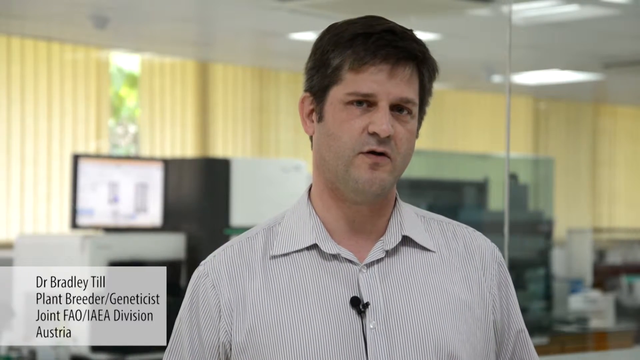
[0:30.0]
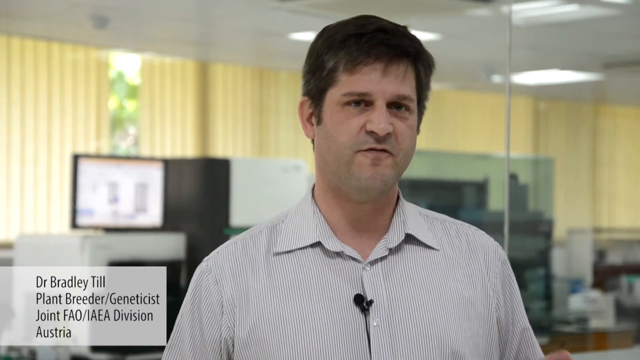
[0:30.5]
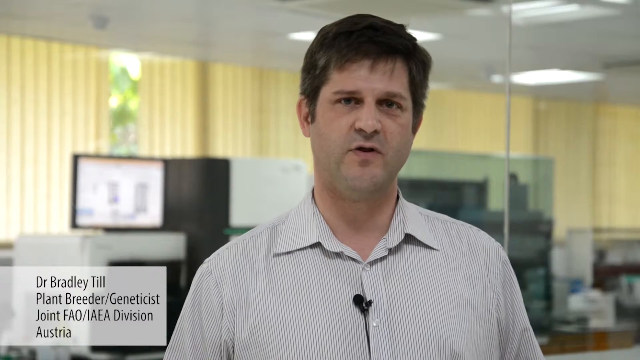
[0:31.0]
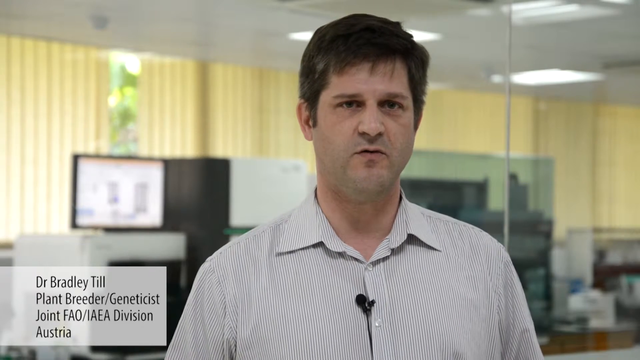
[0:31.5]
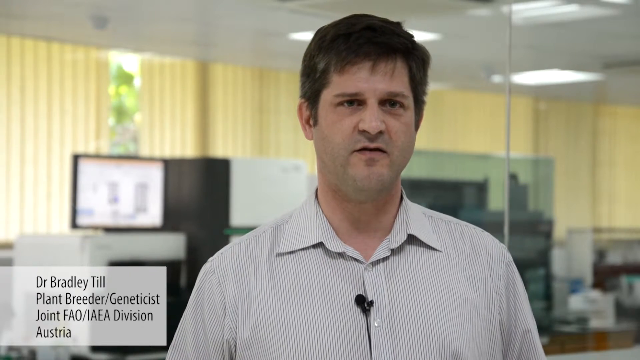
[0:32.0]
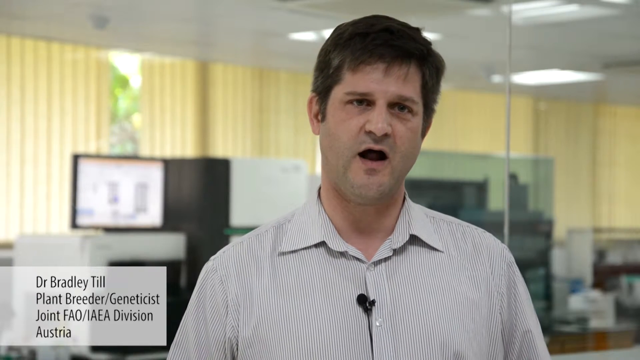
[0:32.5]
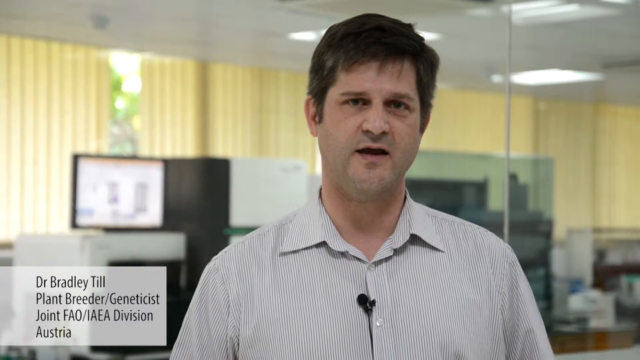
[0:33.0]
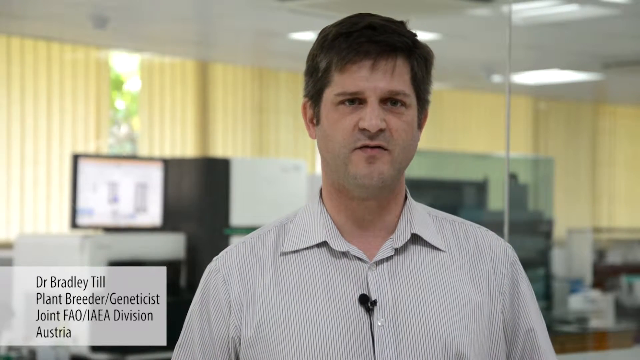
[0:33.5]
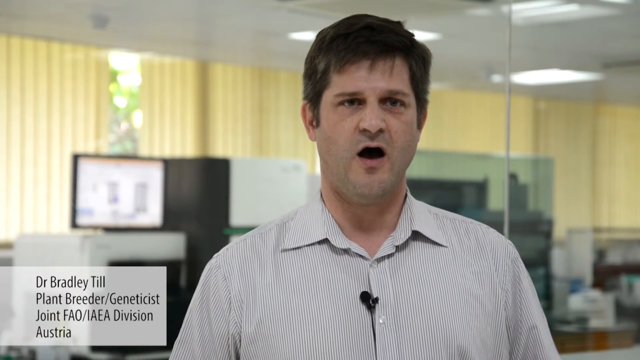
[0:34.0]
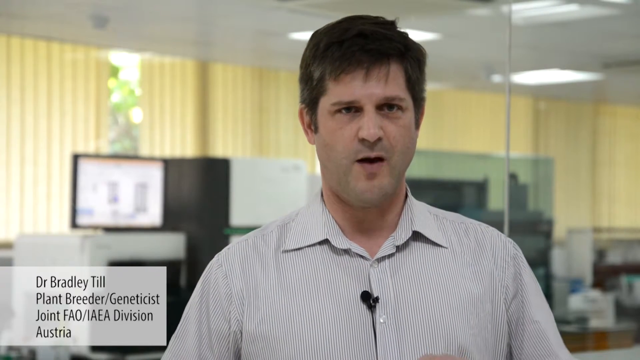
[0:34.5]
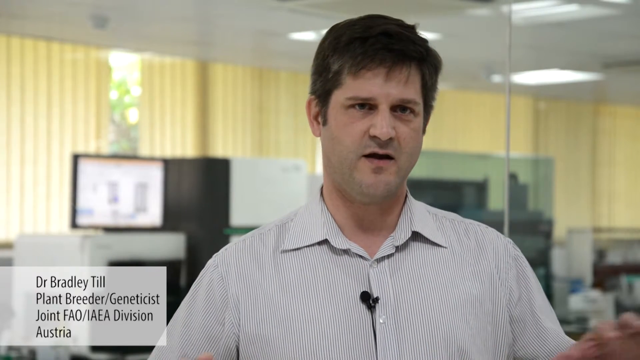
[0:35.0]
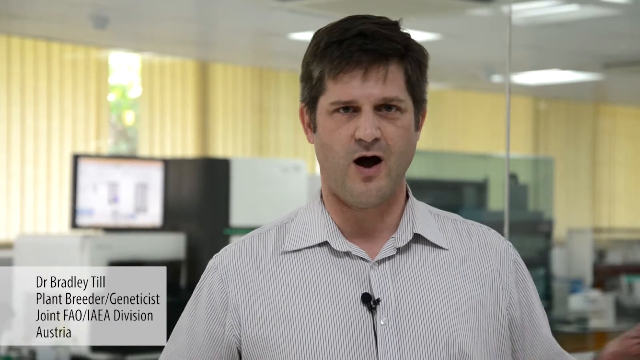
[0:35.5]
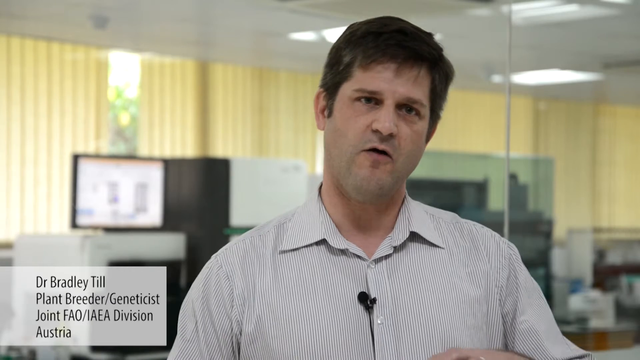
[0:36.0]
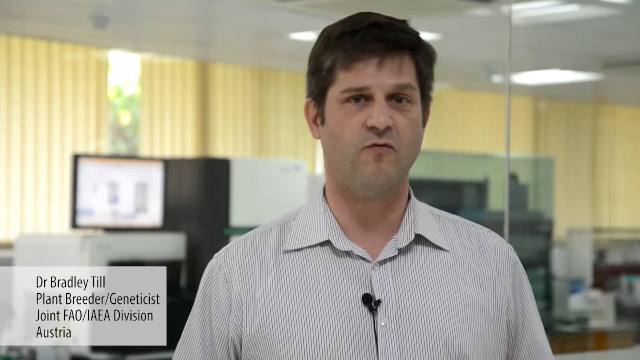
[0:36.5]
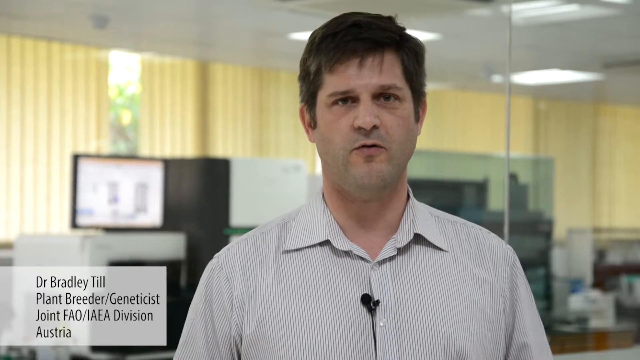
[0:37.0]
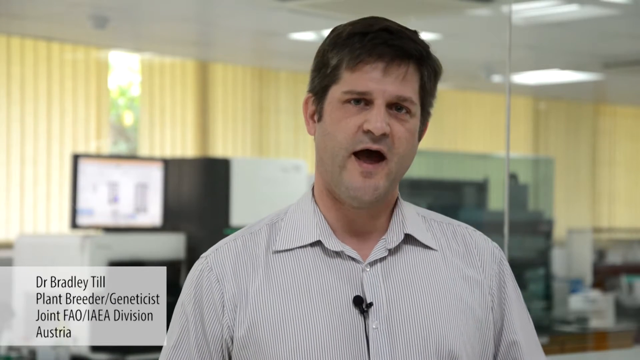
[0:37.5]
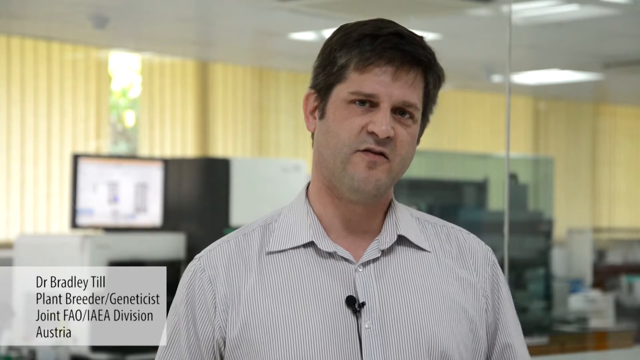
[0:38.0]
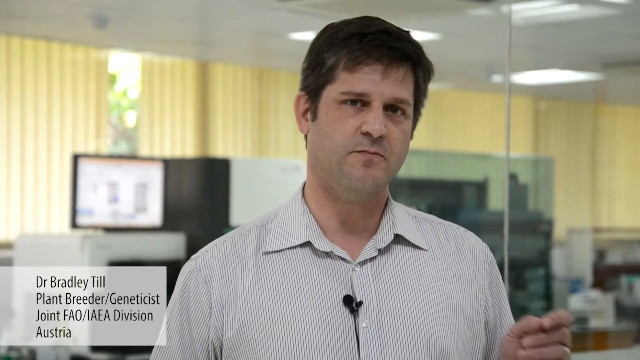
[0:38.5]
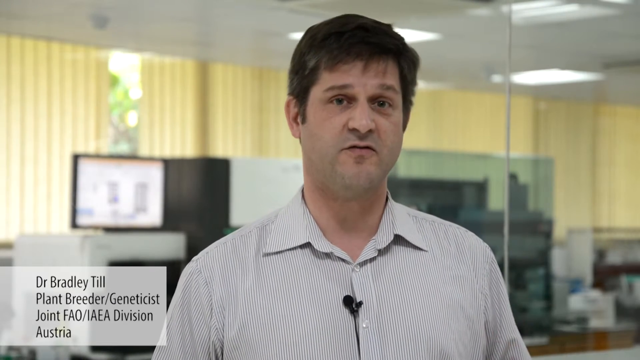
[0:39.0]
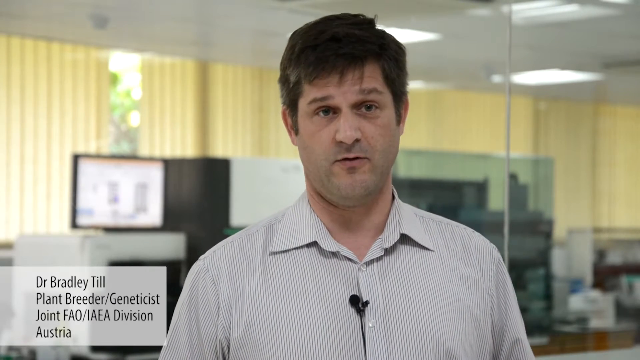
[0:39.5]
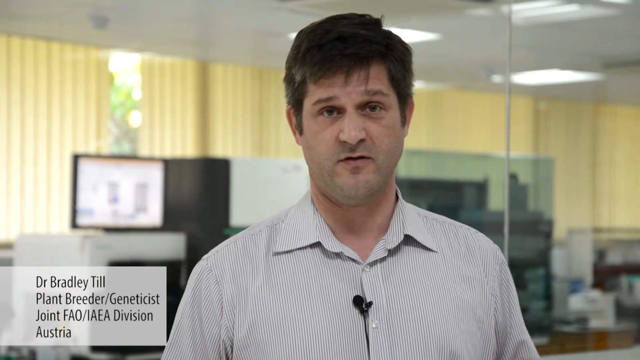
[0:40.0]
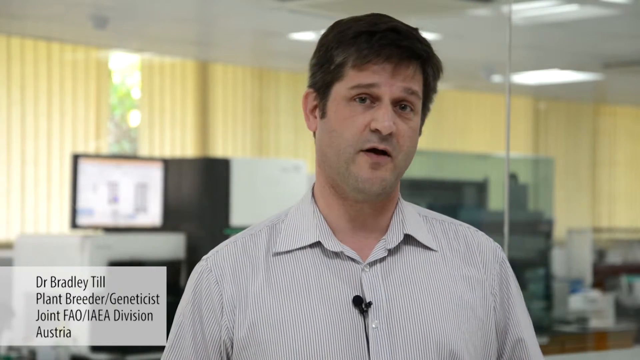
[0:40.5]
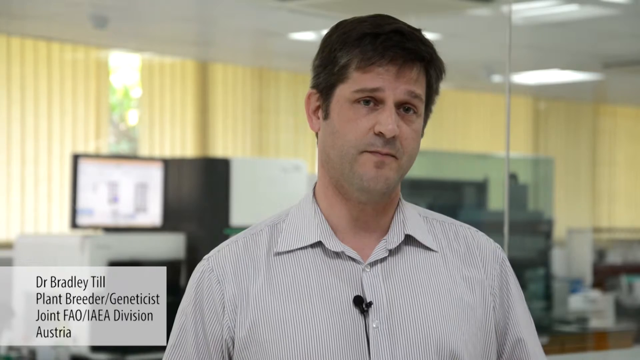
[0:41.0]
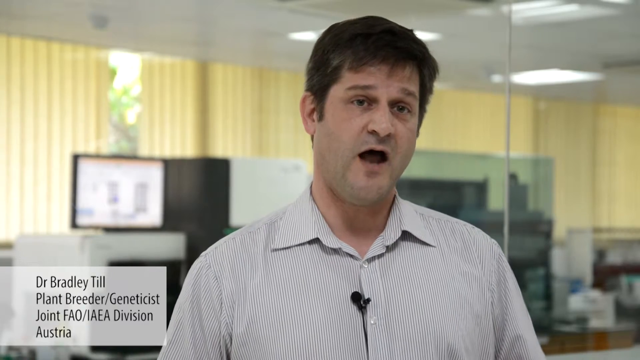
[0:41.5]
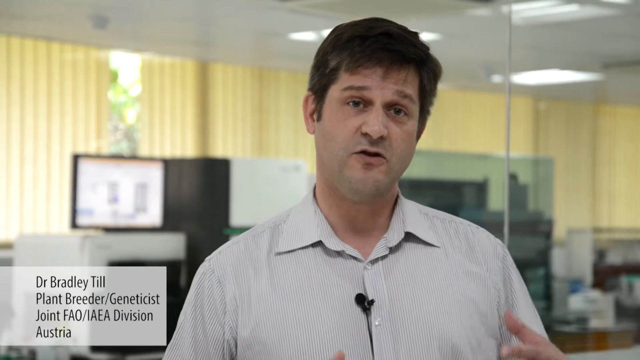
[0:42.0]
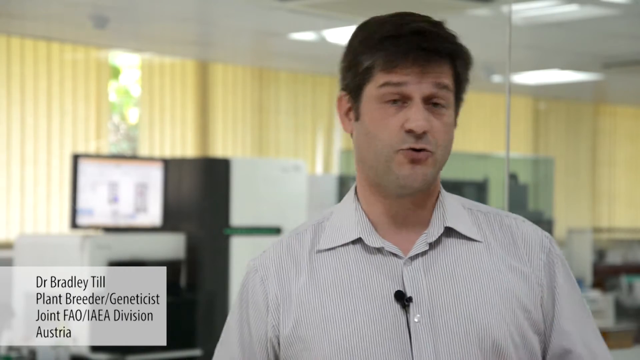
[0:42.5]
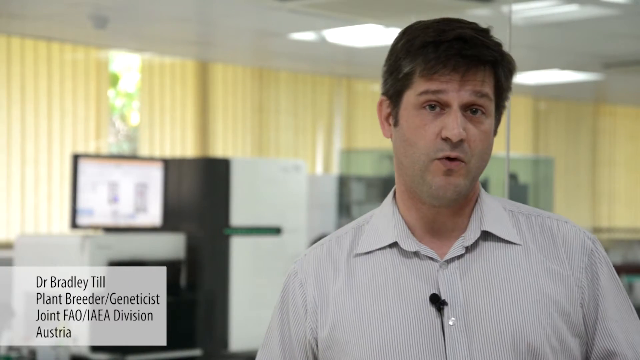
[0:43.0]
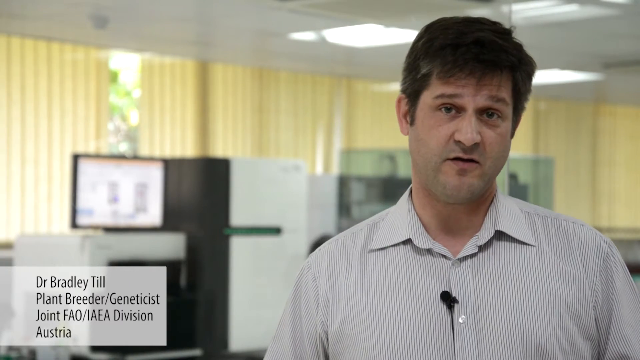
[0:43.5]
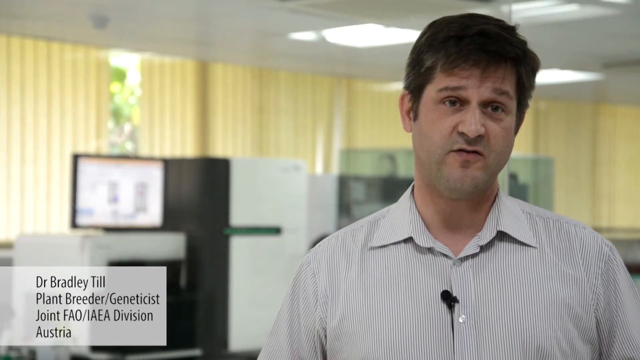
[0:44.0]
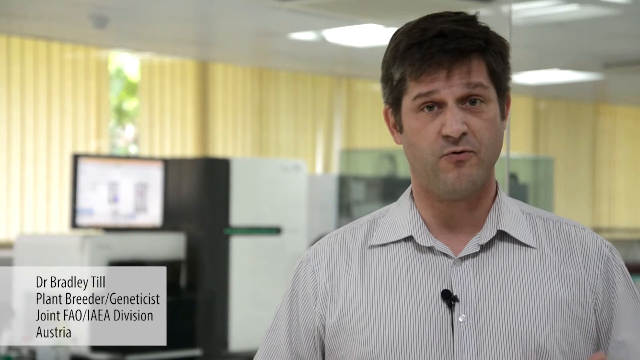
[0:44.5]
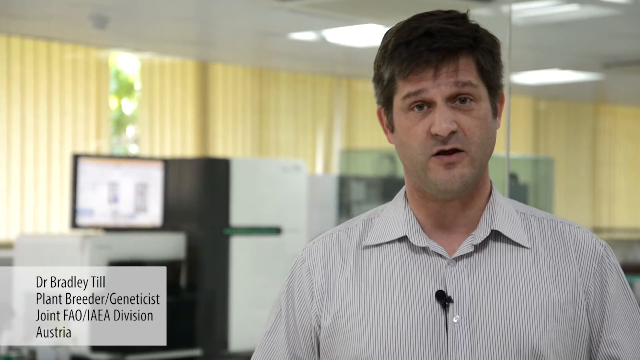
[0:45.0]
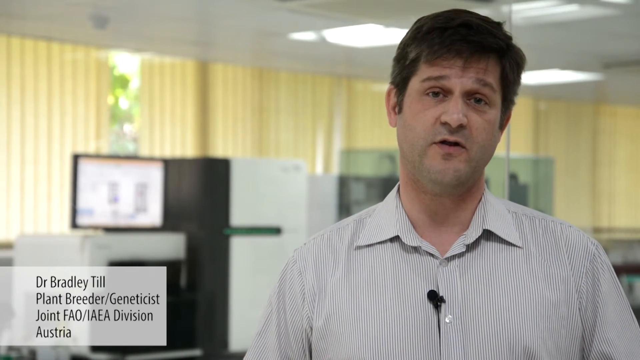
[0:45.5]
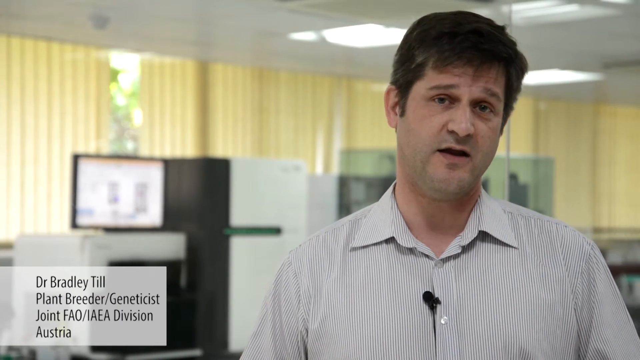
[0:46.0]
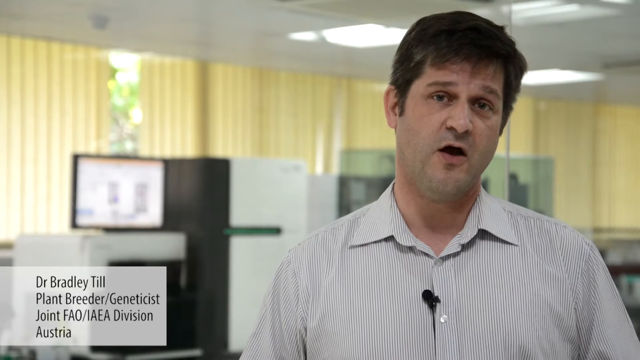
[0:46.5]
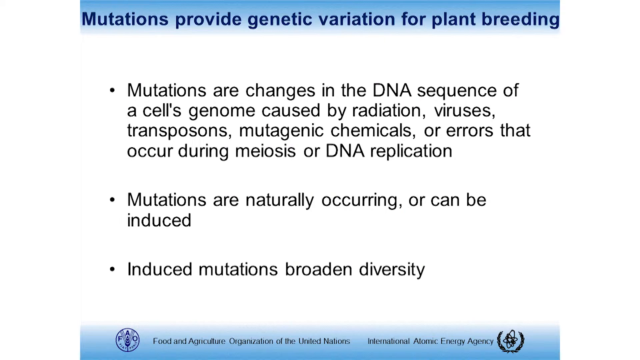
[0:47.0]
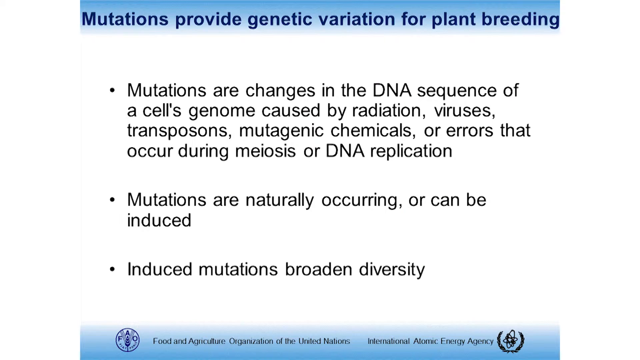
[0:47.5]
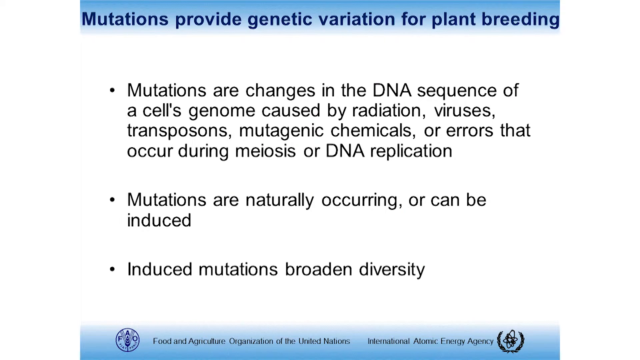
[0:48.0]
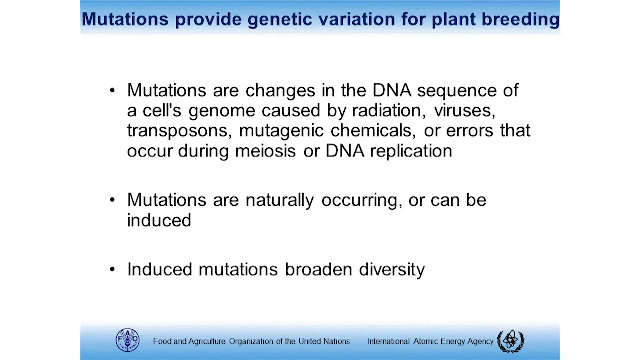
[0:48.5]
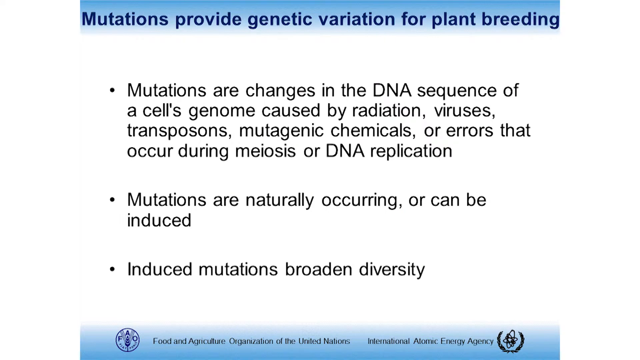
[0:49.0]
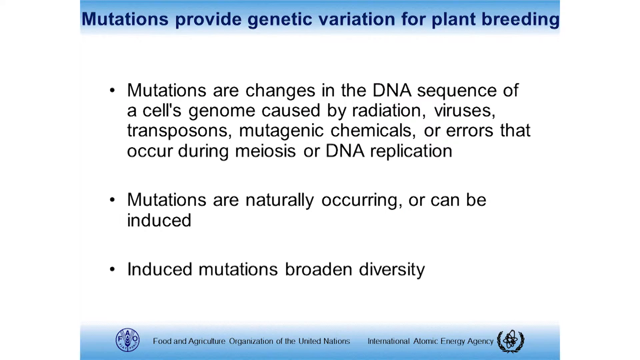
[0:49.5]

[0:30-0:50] The man is seen from the chest to the top of his head, speaking as if giving an interview. He looks like he is in some type of office building, with desks and computers all around him. A light gray rectangular box at the bottom left of the screen gives his information as "Dr. Bradley Till plant breeder geneticist joint FAO/IAEA division", Austria. After he speaks for a bit, the screen changes to a white slide with a light blue rectangular box across the top containing the heading "mutations provide a genetic variation for plant breeding". Below are three bullet points: "mutations are changes in the DNA sequence of the cell's genome caused by radiation, viruses, transposons, mutagenic chemicals, or errors that occur during meiosis or DNA replication", "mutations are naturally occurring or can be induced", and "induced mutations broaden diversity".